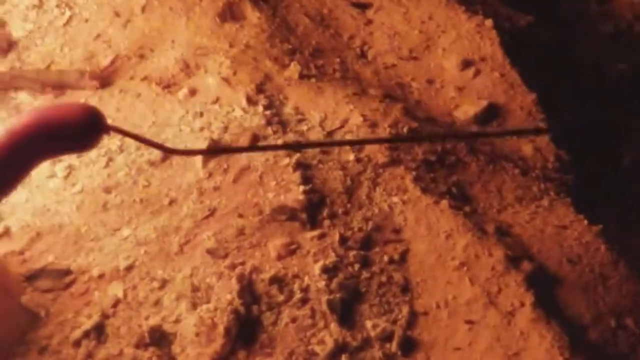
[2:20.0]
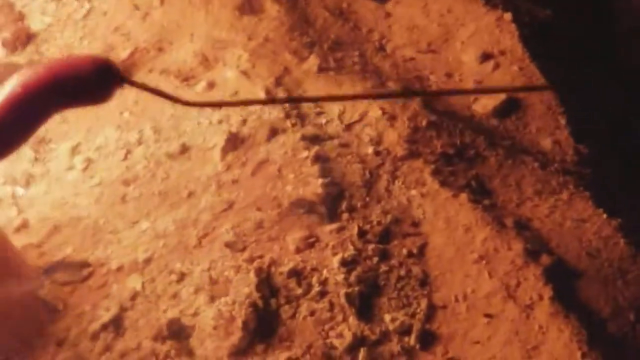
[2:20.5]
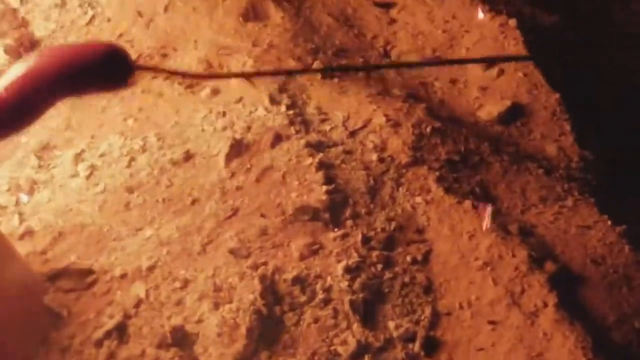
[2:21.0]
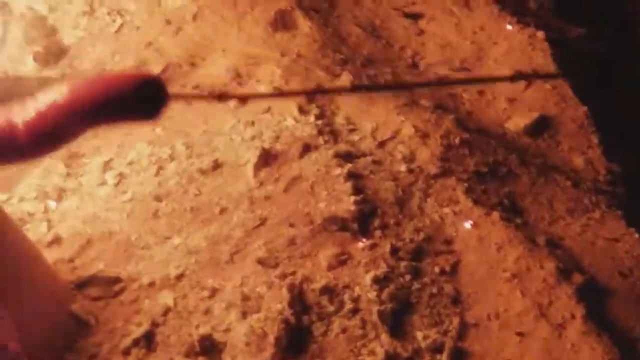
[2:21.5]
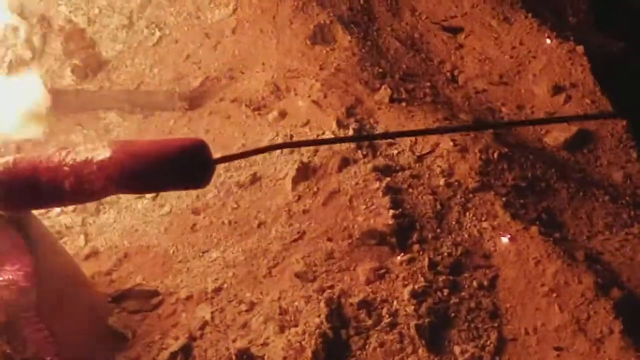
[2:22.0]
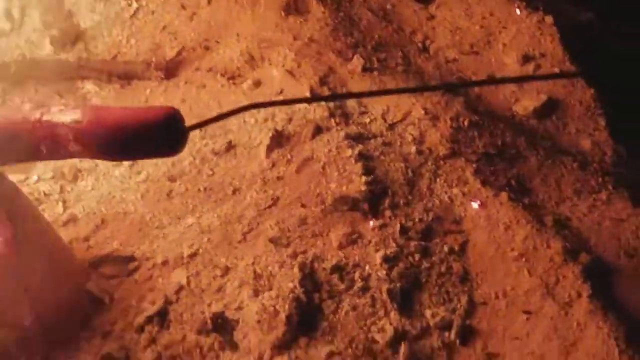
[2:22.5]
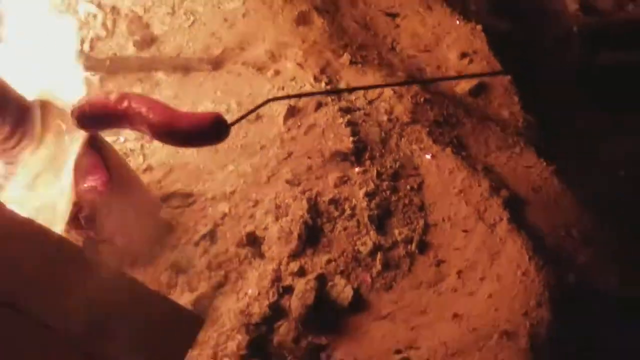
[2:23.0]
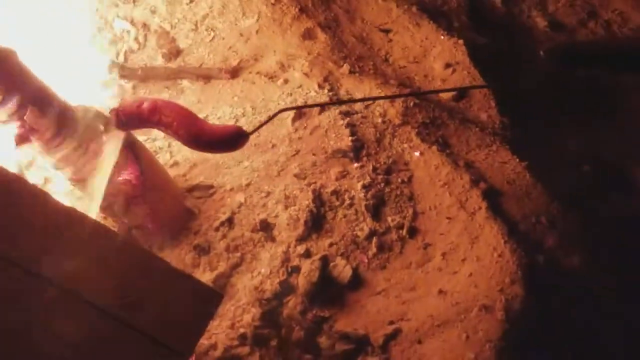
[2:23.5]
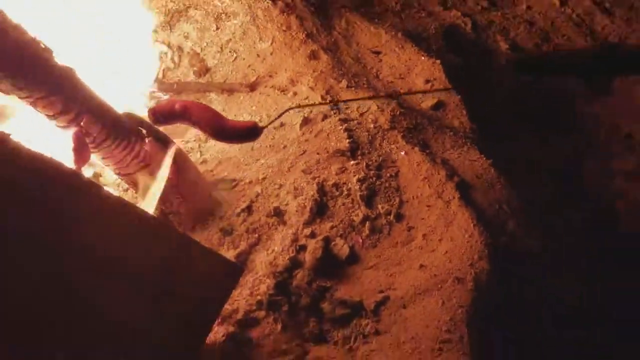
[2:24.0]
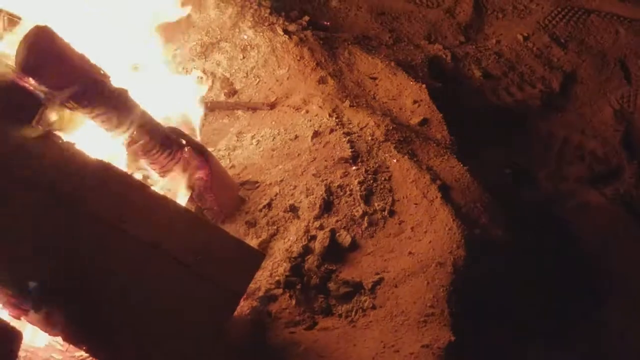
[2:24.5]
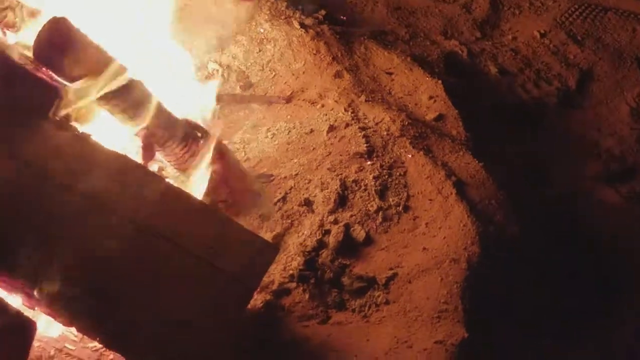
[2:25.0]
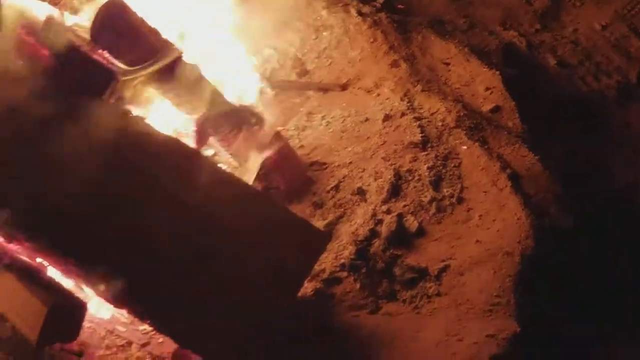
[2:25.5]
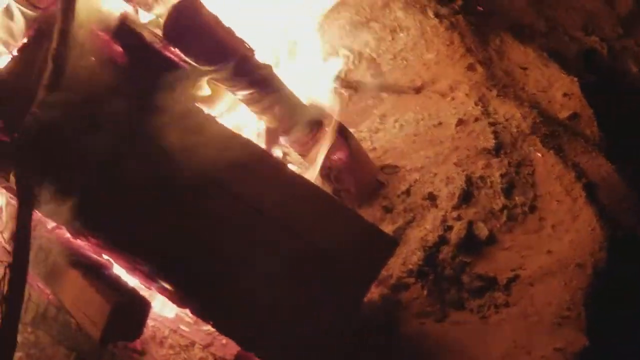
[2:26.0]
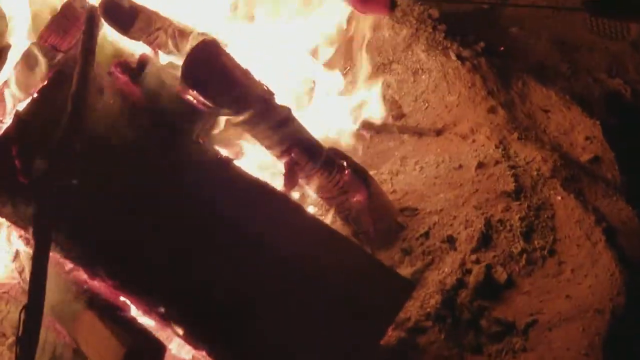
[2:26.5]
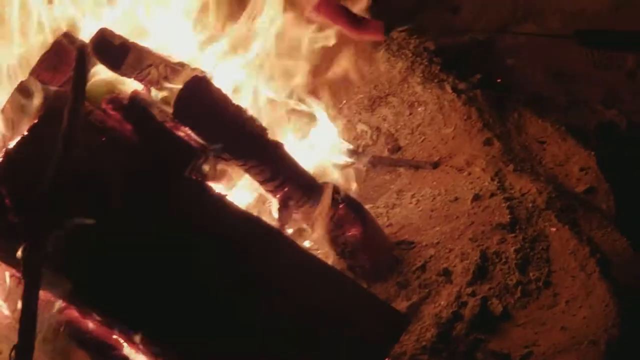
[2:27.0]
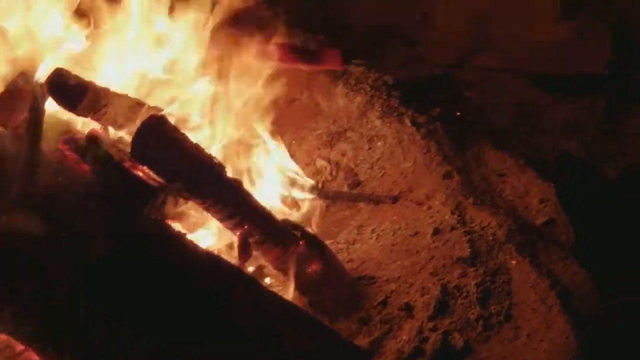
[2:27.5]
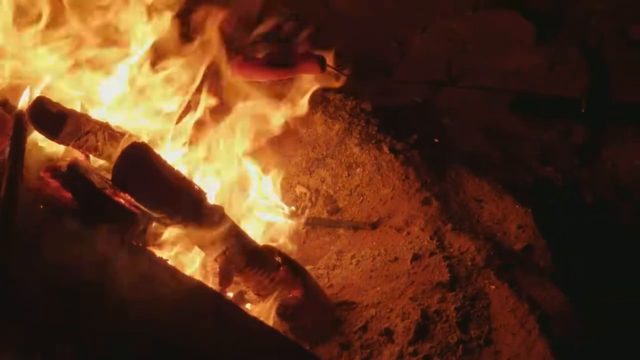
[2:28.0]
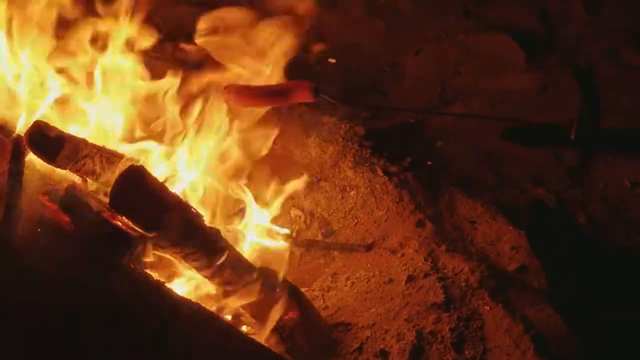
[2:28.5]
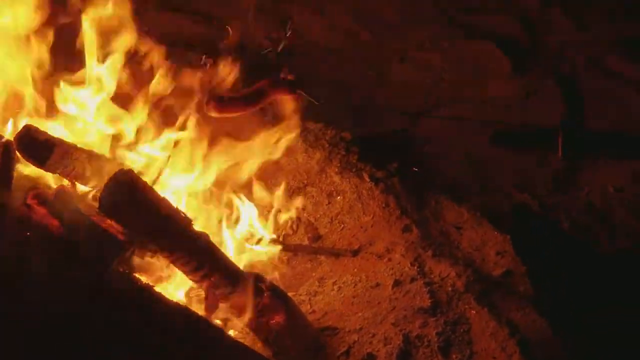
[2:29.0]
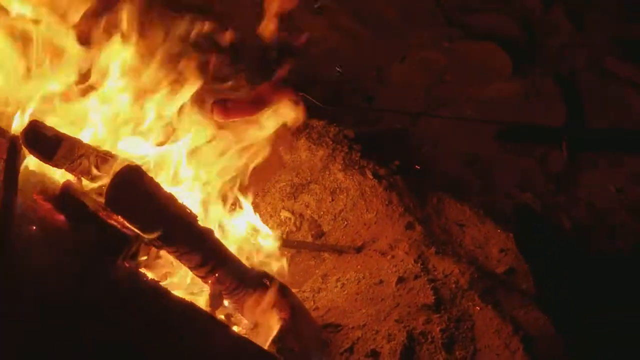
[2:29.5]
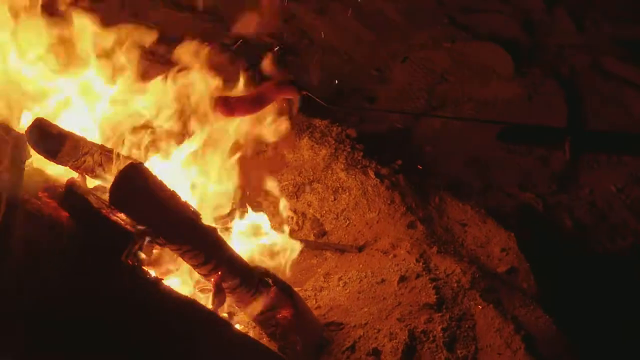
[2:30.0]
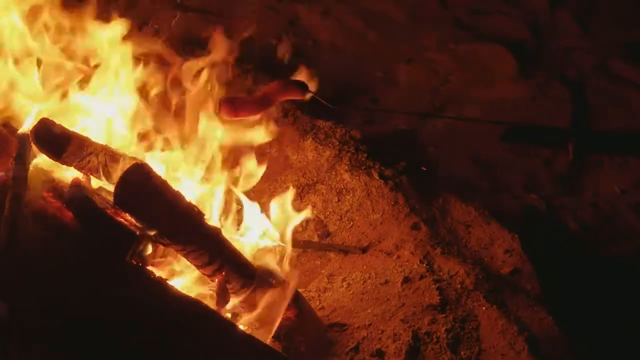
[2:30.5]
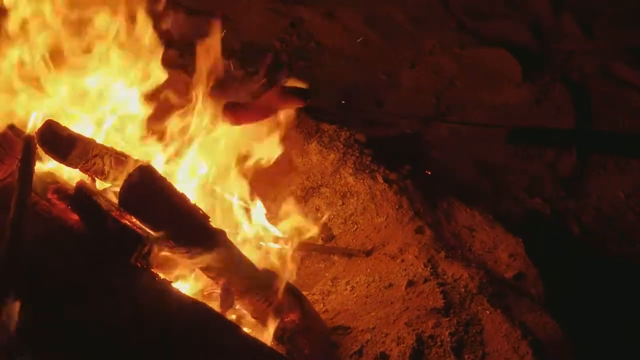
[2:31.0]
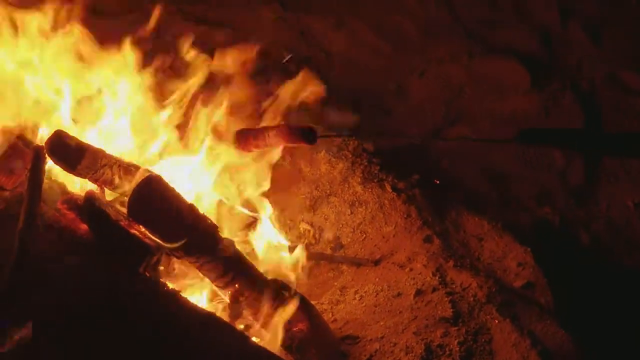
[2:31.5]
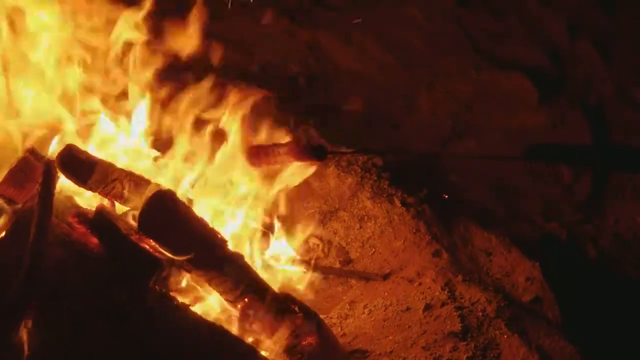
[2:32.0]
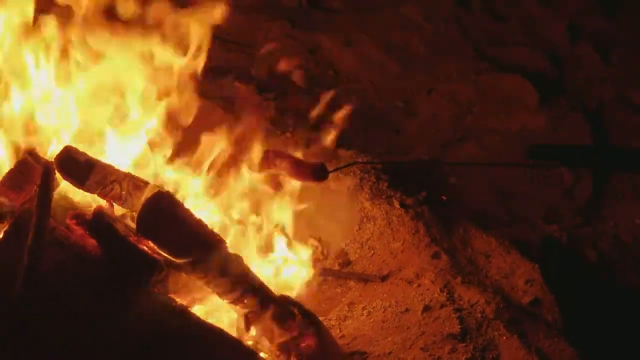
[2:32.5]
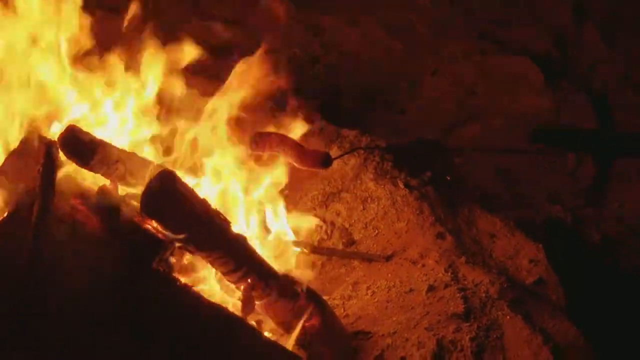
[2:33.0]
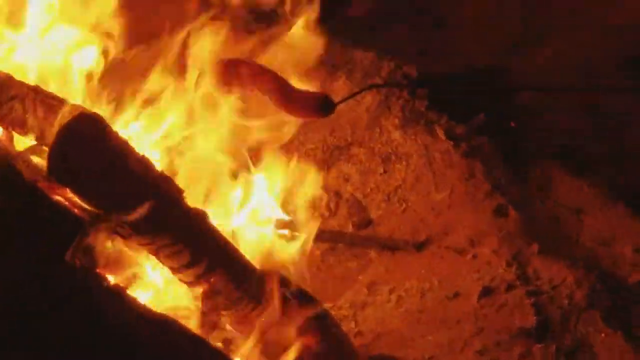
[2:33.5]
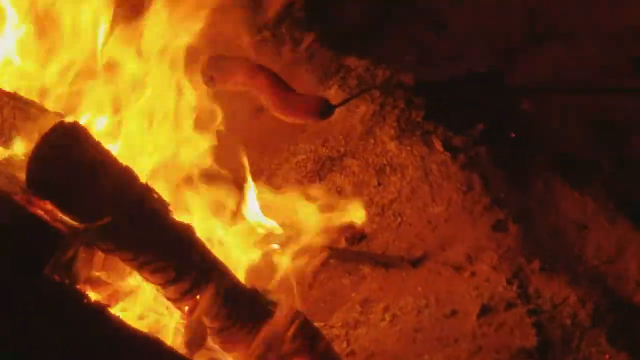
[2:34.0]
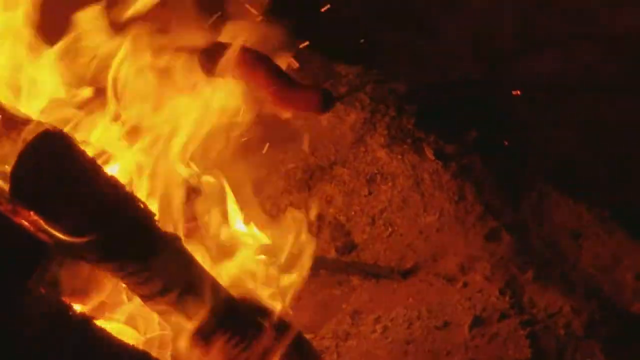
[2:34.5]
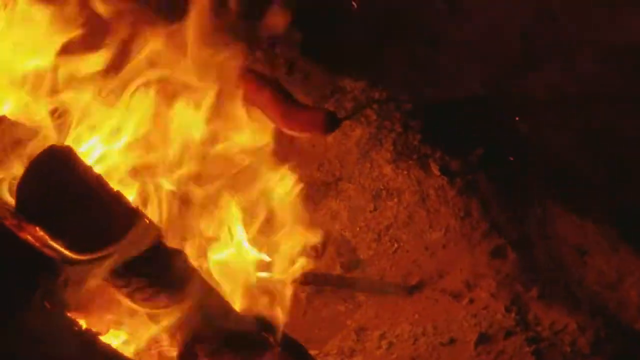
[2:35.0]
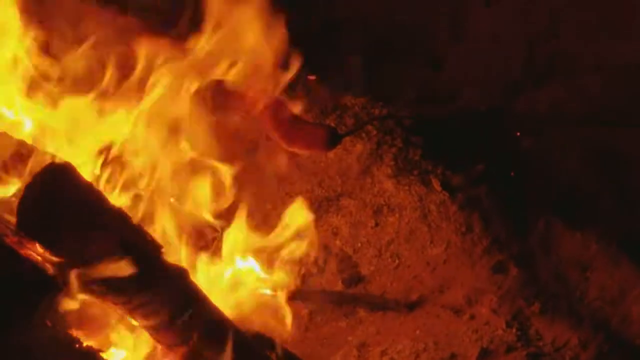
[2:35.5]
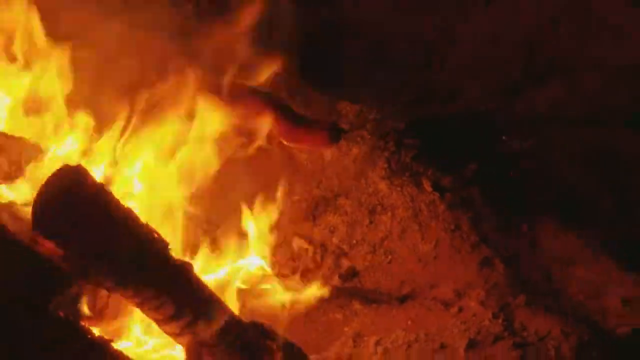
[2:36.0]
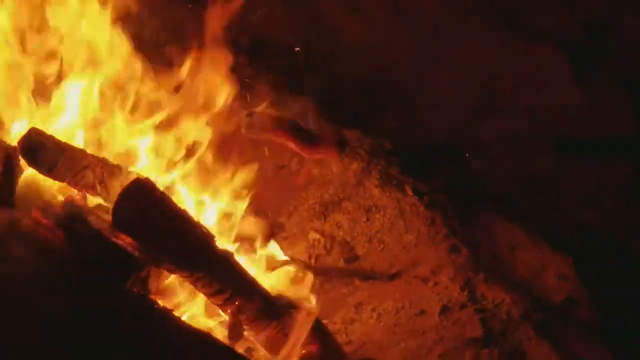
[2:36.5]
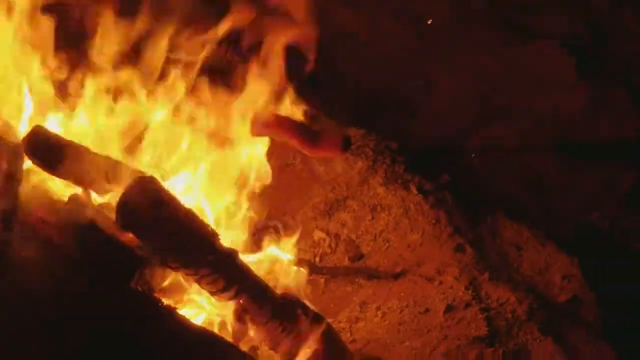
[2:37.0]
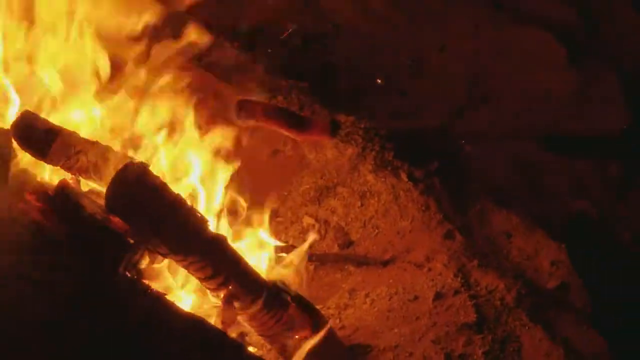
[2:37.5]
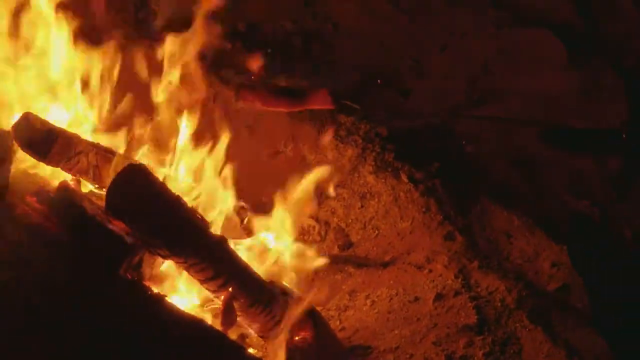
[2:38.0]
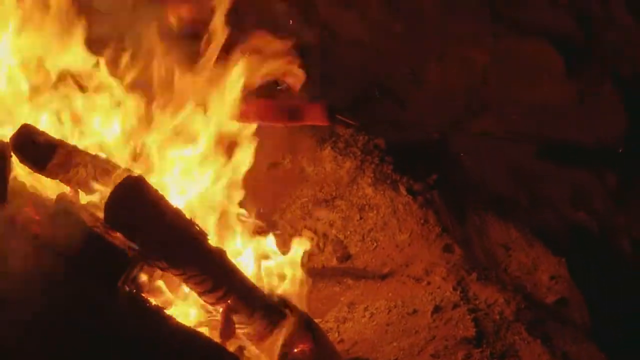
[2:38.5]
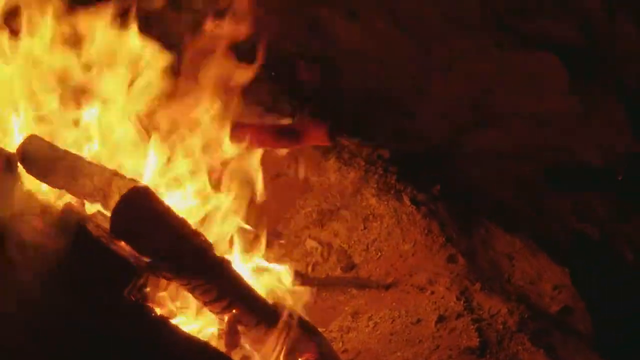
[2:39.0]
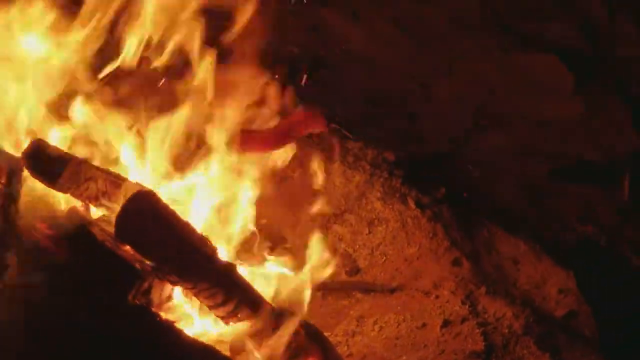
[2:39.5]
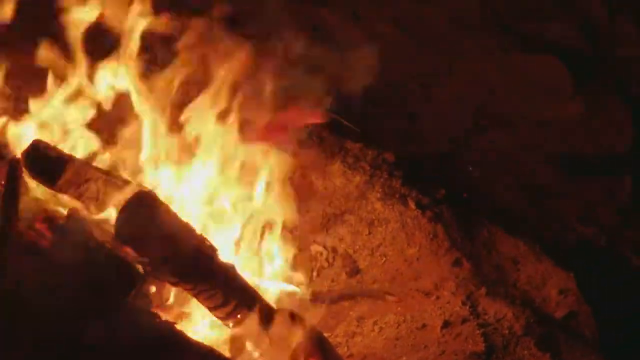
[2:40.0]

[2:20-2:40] The person holding the stick lifts it and points the Vienna toward where the hotter flames are. The flames get higher as oil from the Vienna or sausage drips into them. The stick moves with the Vienna, while the hand holding the stick is not visible.